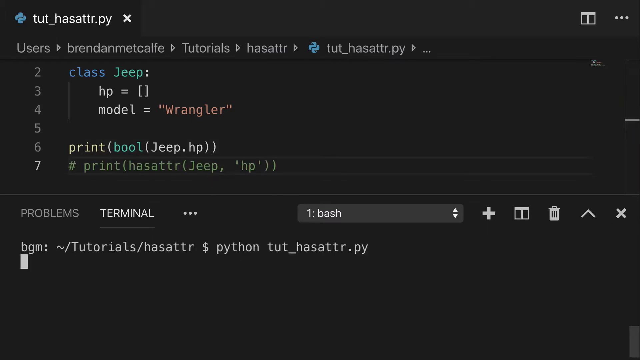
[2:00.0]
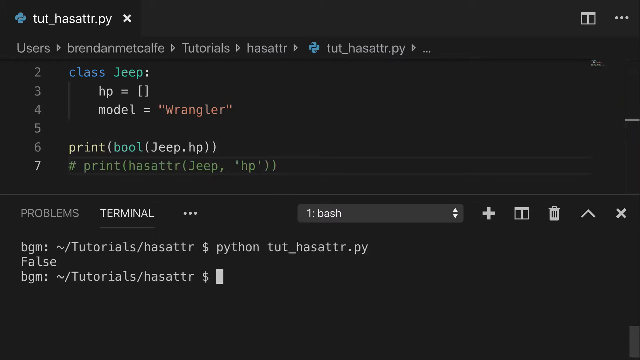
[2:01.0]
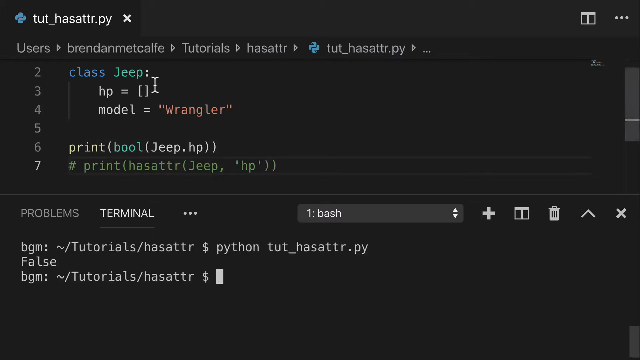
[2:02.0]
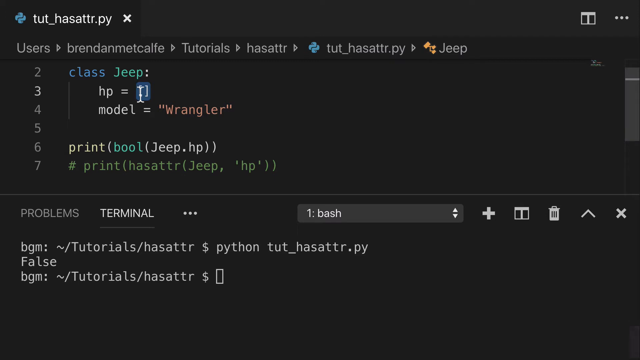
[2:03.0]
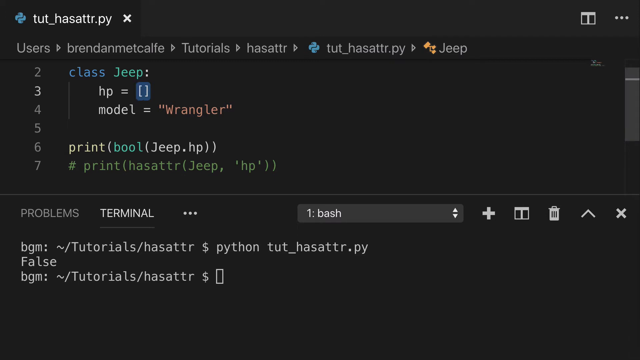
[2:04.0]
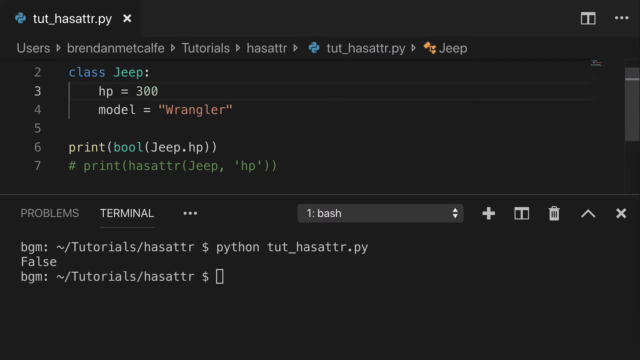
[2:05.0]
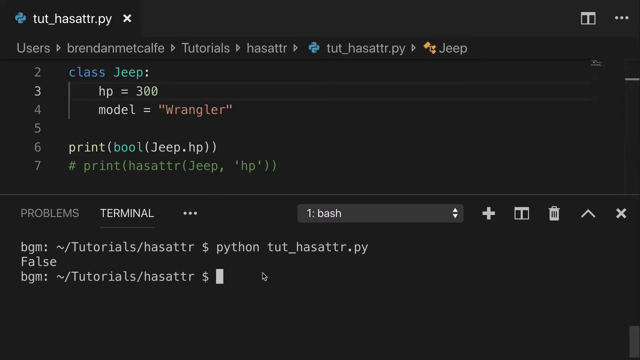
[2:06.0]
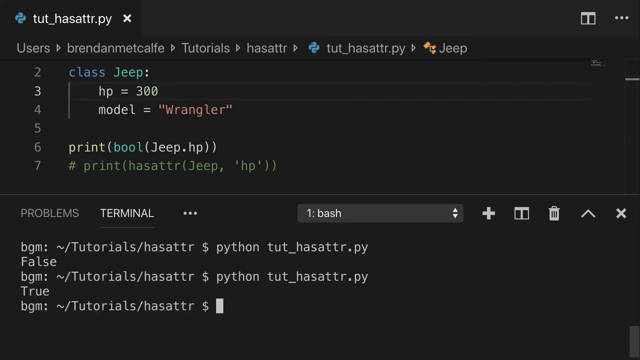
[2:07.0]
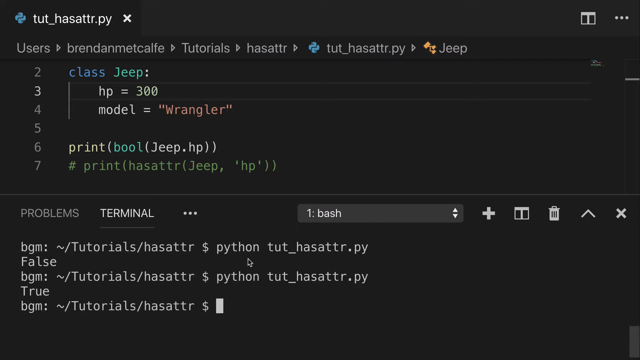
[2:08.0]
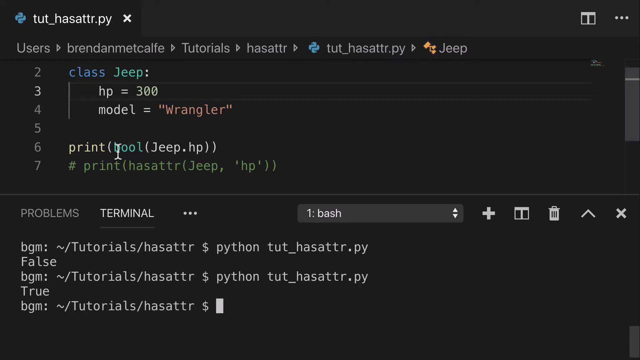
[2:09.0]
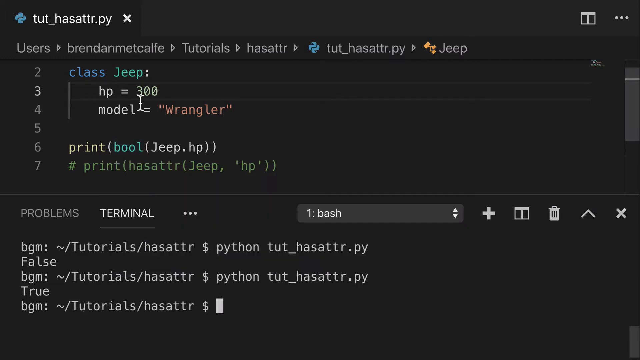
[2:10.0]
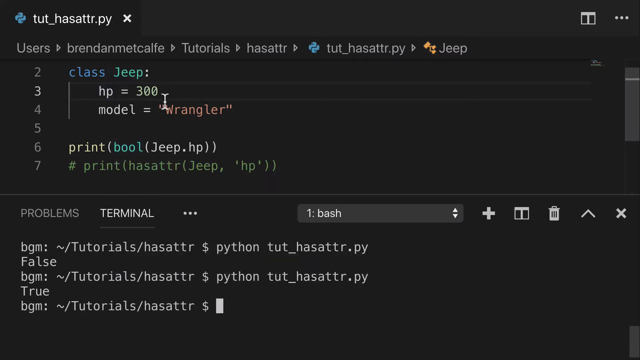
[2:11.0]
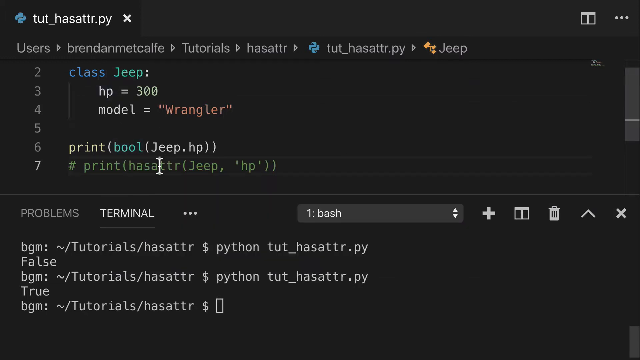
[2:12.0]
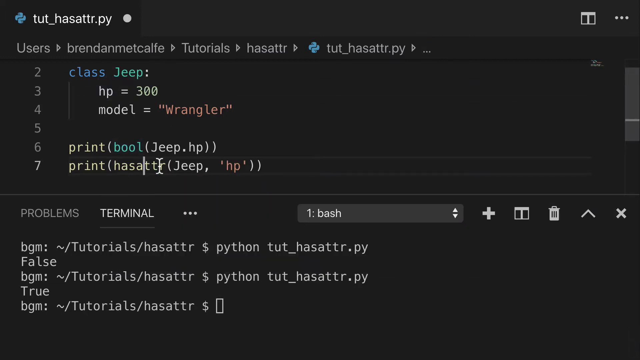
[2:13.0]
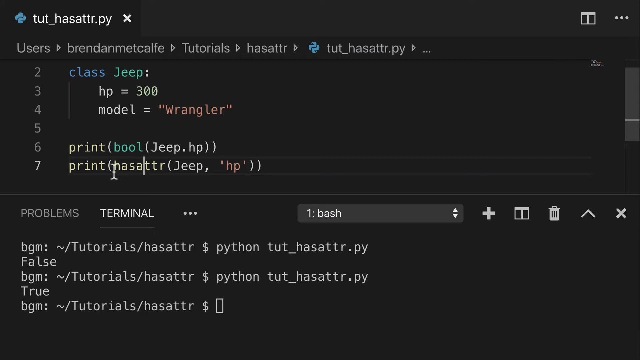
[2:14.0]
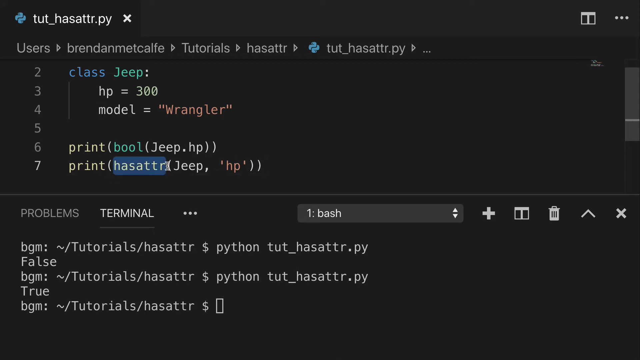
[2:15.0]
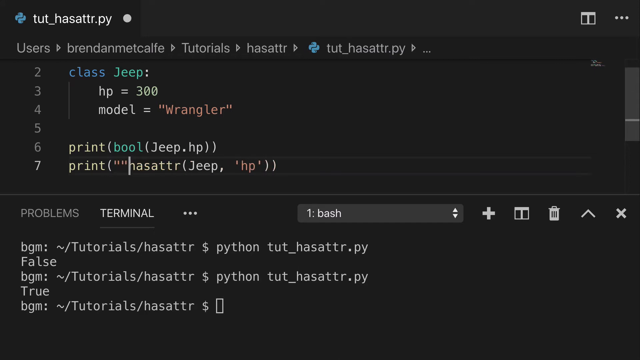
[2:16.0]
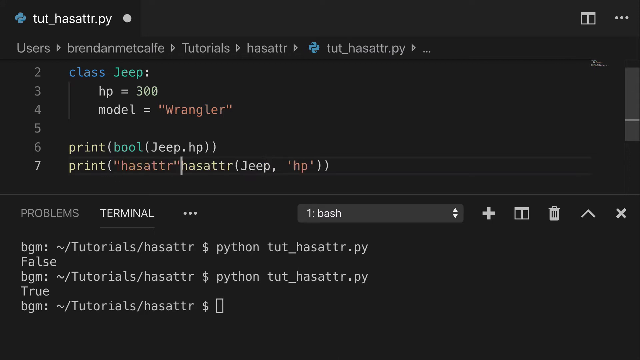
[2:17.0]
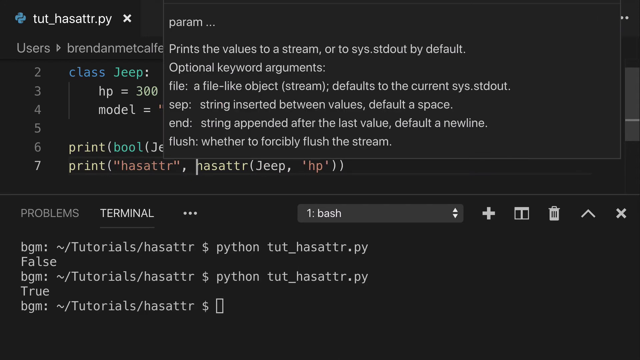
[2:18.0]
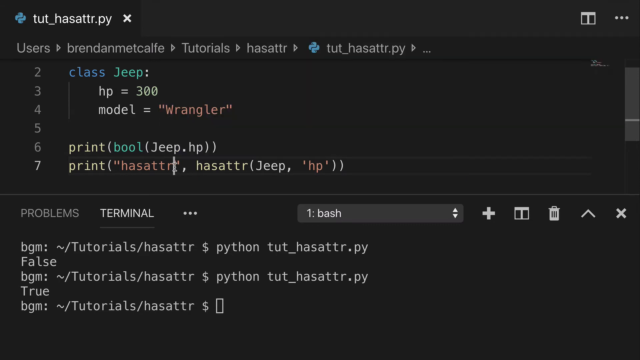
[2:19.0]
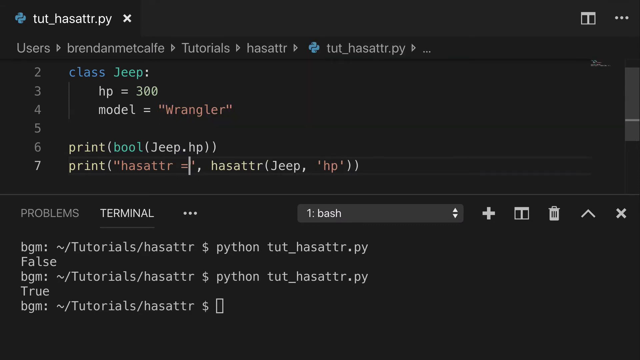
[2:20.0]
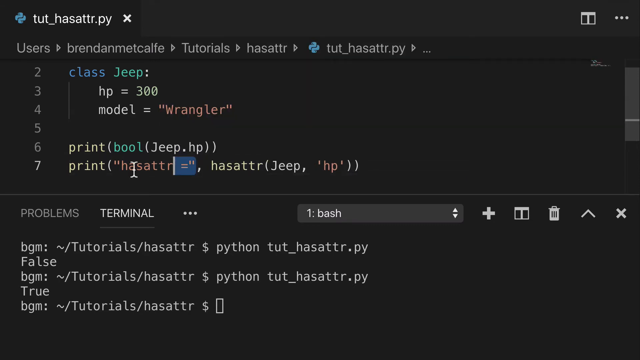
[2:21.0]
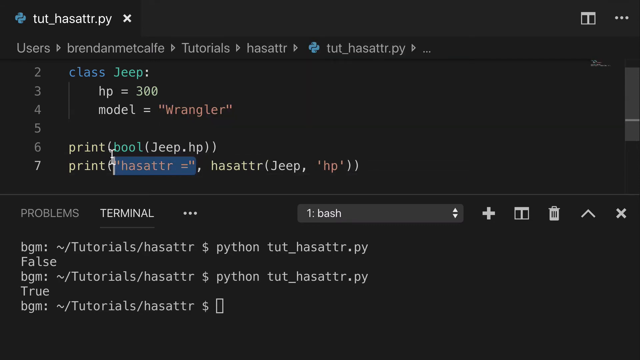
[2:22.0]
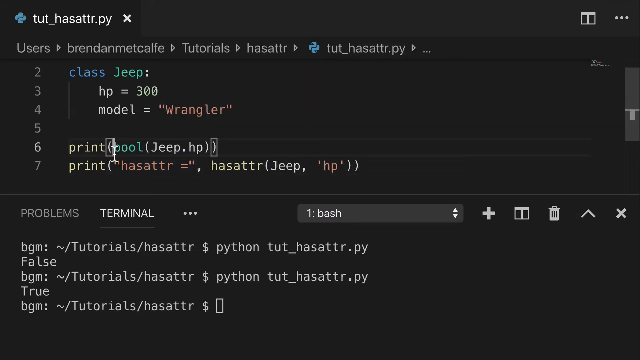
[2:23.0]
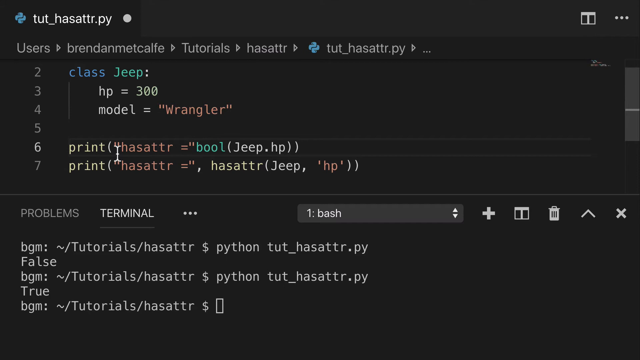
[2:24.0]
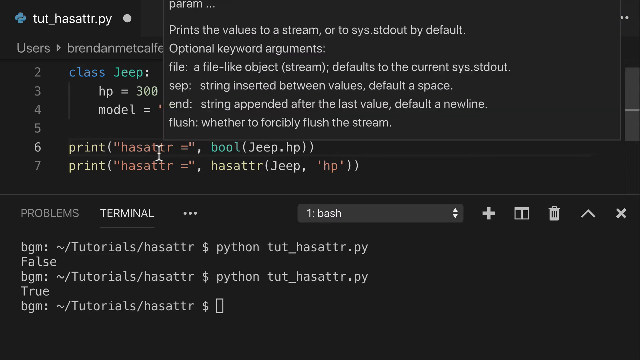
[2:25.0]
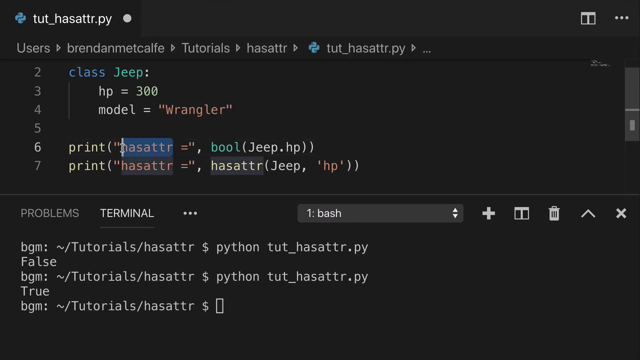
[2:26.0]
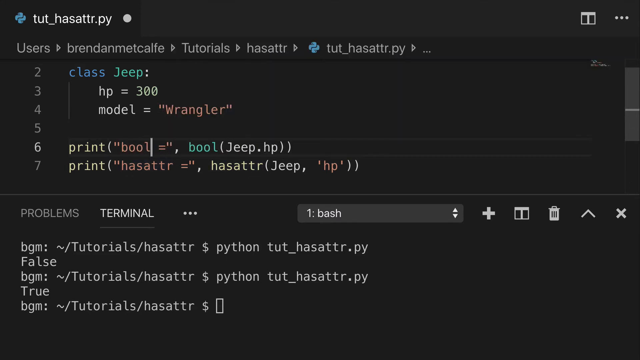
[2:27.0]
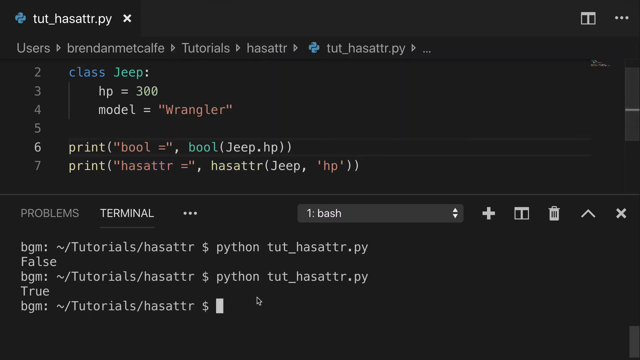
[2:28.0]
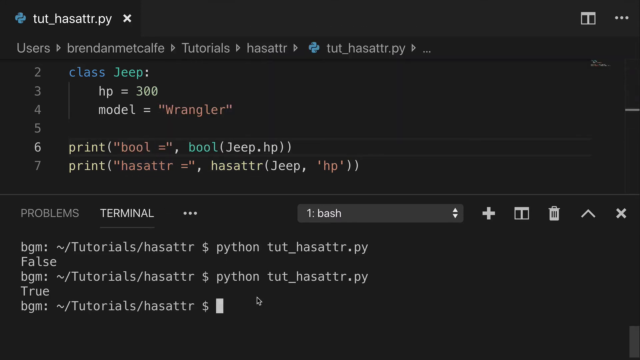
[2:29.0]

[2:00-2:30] A Python editor screen with a black dark background shows the file tut_hasattr.py. The screen is split horizontally in the middle, with the code in the upper portion and the terminal in the lower portion. There are 7 lines in total, with code written on lines 2, 3, 4, 6 and 7. The code on line 7 is commented out with #. The code has already been run, with the output "false". The third line reads "hp =[]"; the [] is selected and replaced with 300. The code is run again by typing the filename, and the output is "false". The mouse moves back to the code portion, pointing at "bool" on the sixth line, and a dialog box explaining the bool function opens below. The mouse then hovers along the third line, then again on the sixth line. On line 7, "hasattr" is selected and the # on that line is removed. The hasattr function is typed after print, then copied and pasted into the sixth line before the bool function. A dialog box appears briefly while these functions are written. The copied text is then removed and replaced with bool. The terminal is cleared, the filename is typed again to run the code, and the output is displayed.